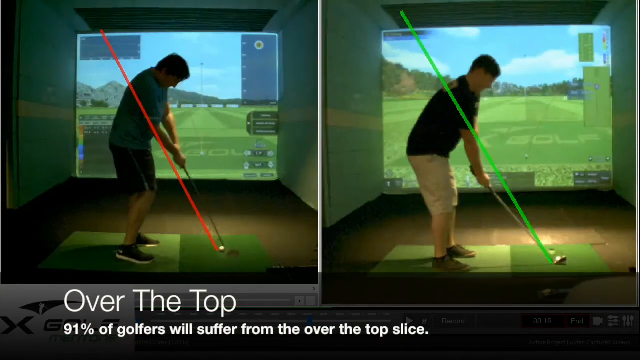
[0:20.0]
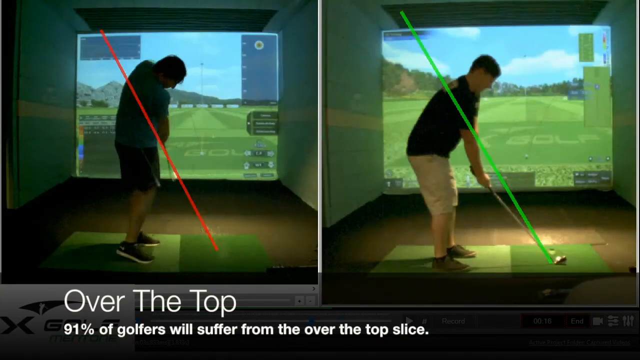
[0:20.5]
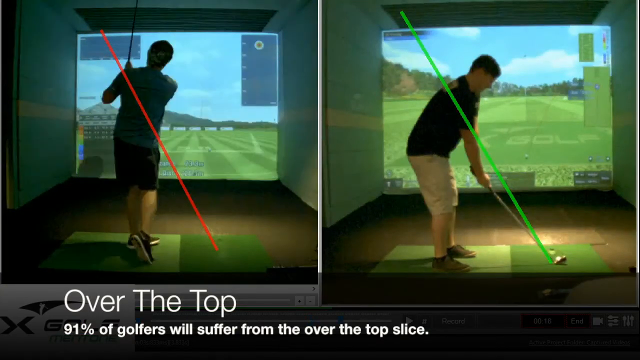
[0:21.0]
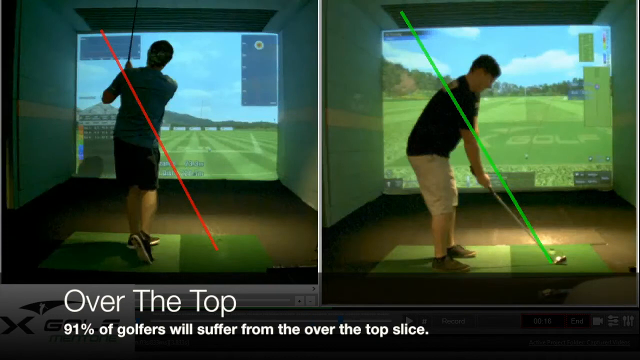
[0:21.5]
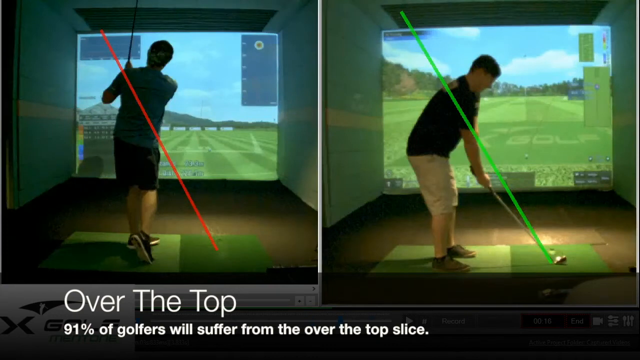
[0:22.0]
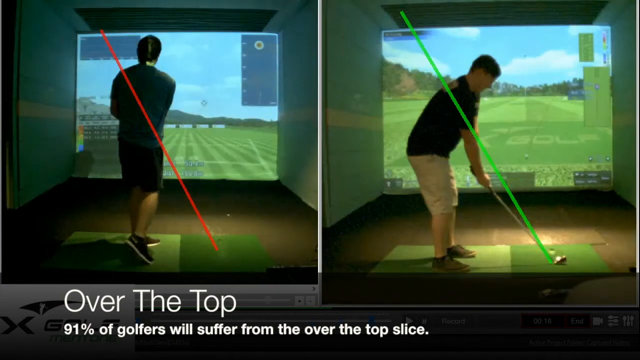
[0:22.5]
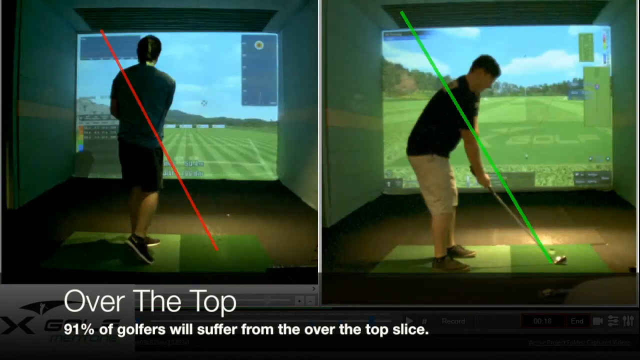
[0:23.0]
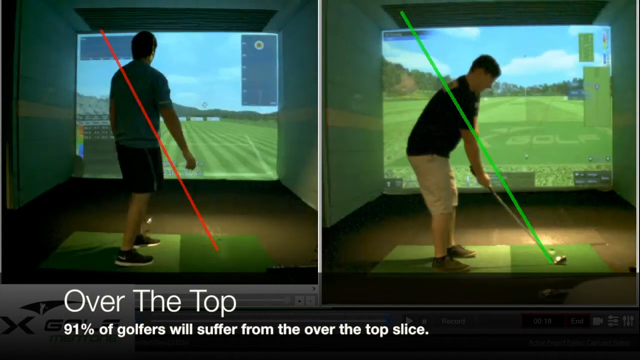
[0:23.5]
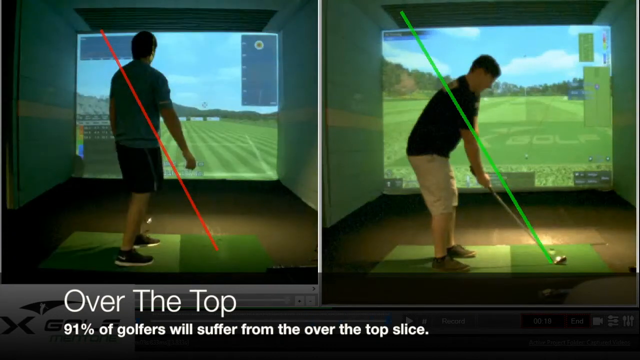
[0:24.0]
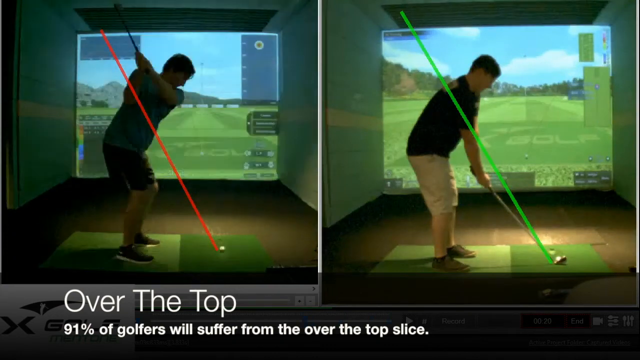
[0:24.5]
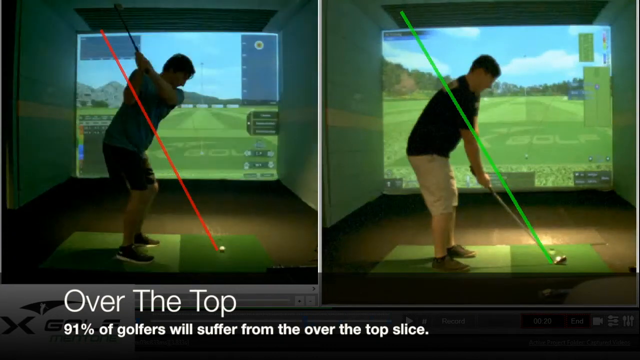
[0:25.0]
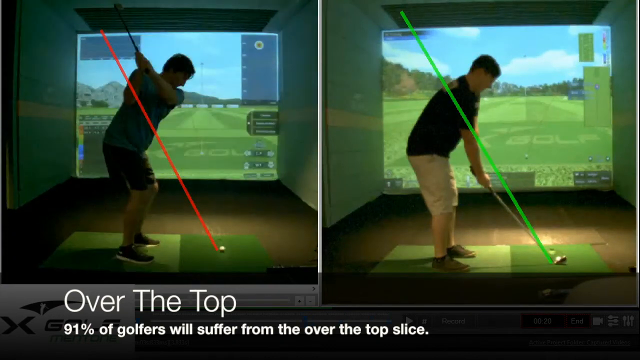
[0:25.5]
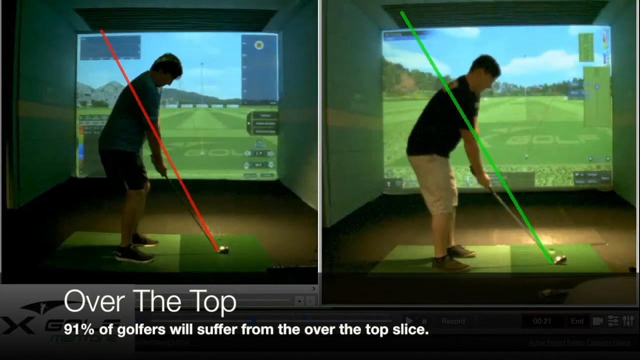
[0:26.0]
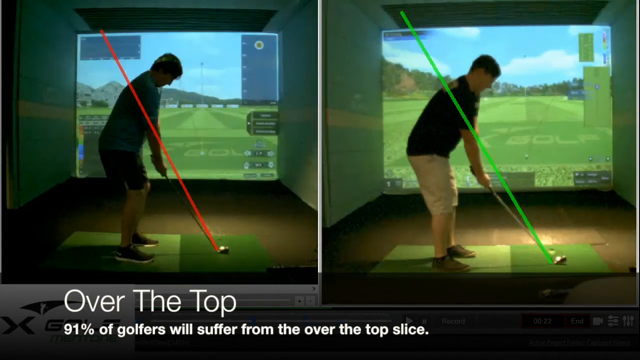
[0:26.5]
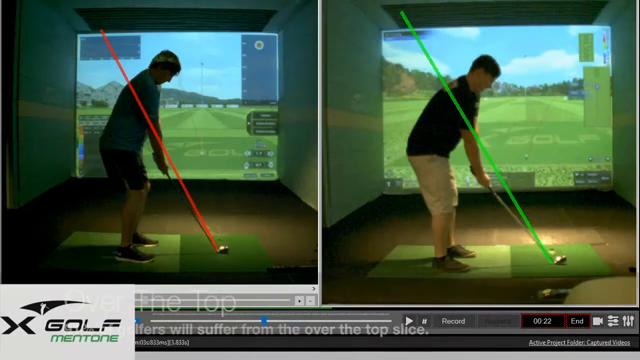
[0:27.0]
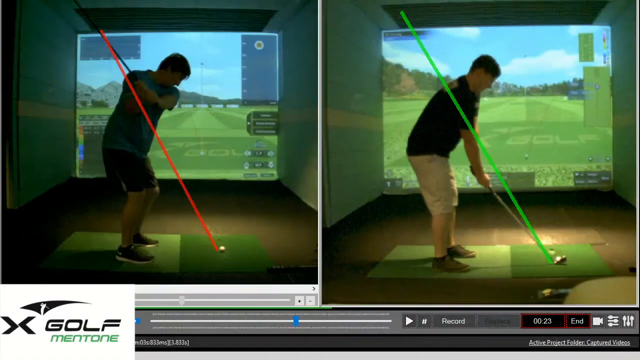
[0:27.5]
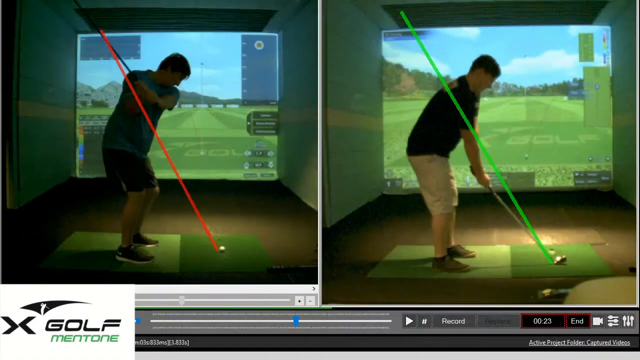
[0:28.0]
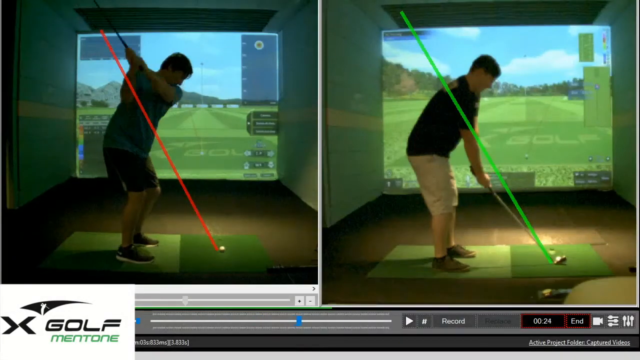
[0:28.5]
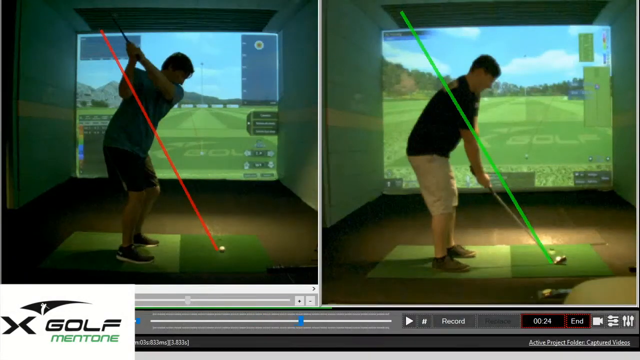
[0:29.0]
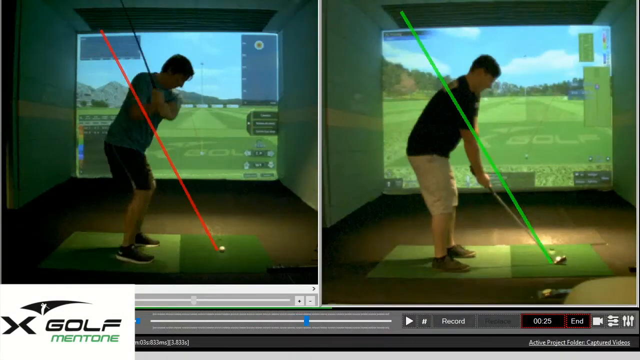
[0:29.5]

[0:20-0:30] A statistic states "91% of golfers will suffer from the over-the-top slice." The split screen continues: on the left, a golfer swings his club with a red line going through the graphic, and on the right, a golfer swings his club with a green line going through the graphic.